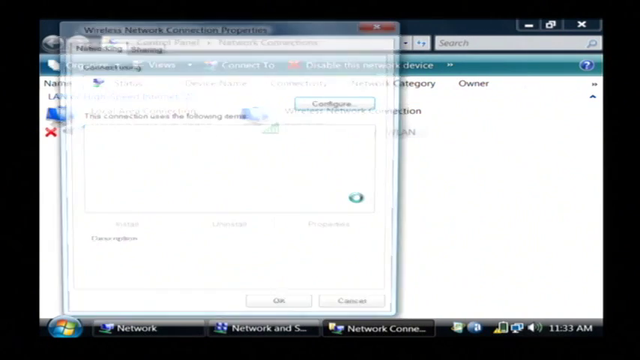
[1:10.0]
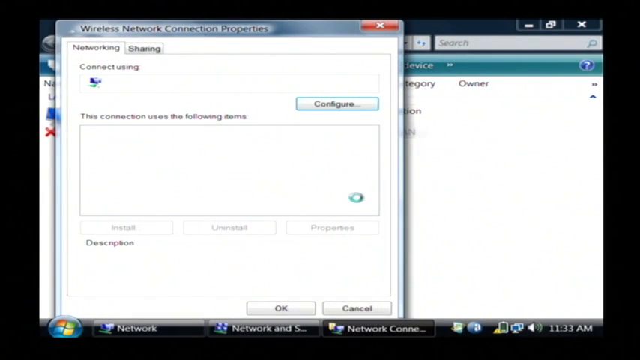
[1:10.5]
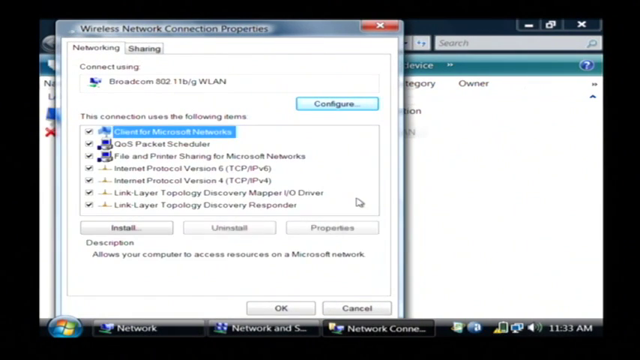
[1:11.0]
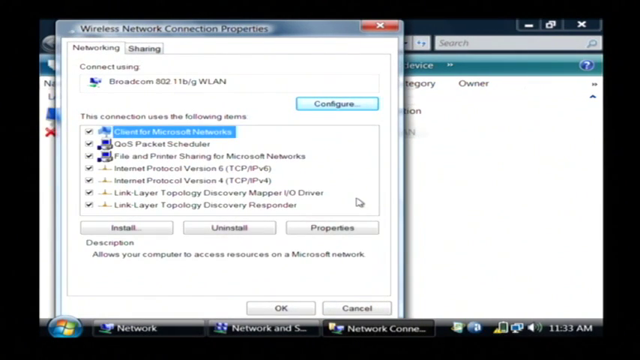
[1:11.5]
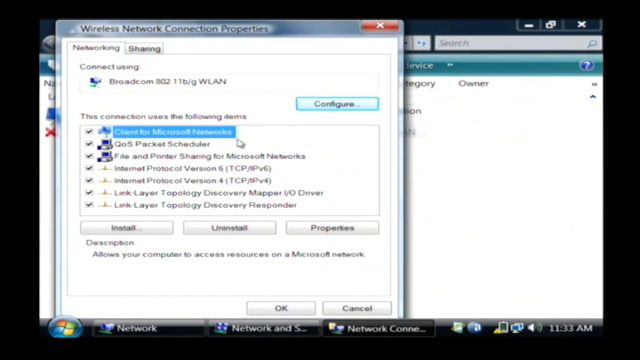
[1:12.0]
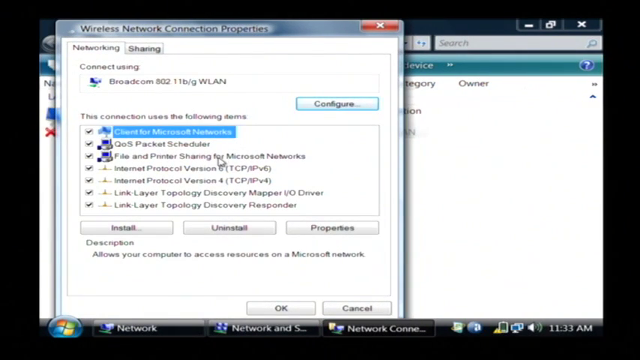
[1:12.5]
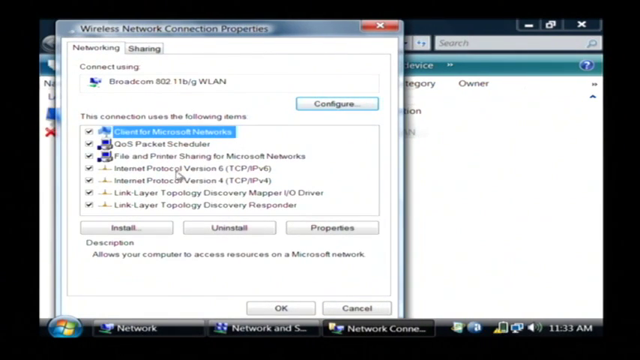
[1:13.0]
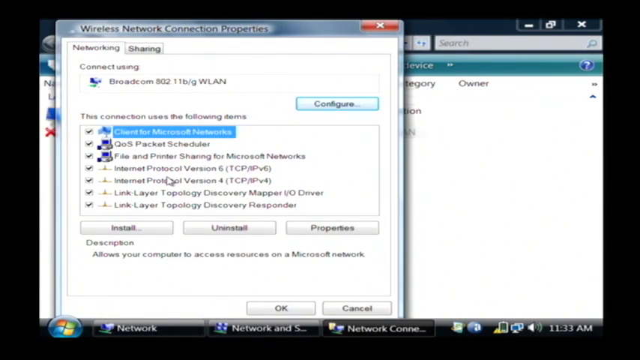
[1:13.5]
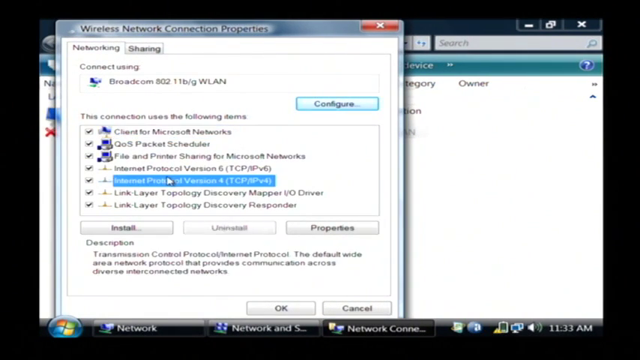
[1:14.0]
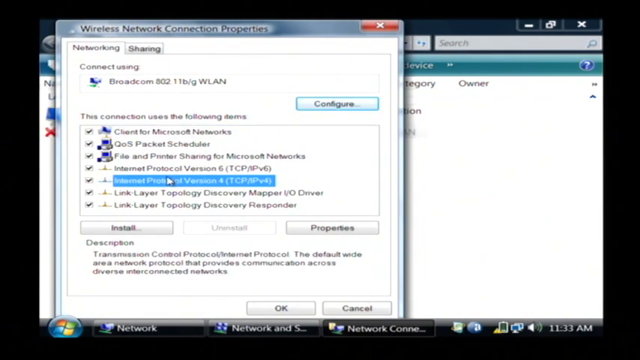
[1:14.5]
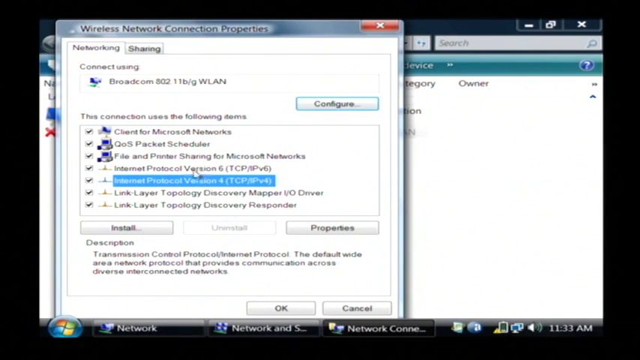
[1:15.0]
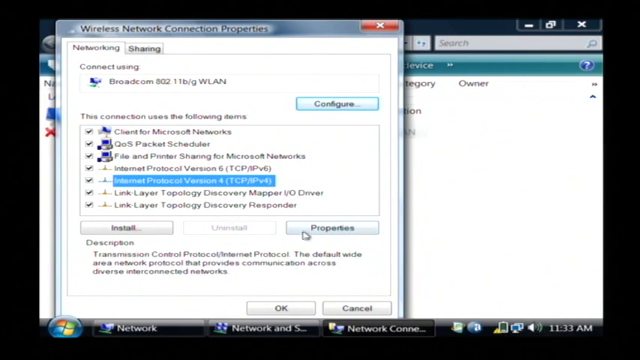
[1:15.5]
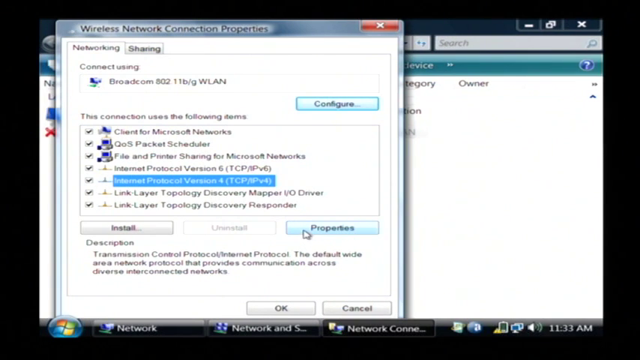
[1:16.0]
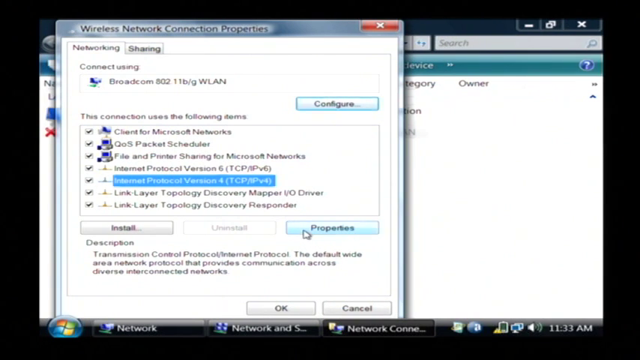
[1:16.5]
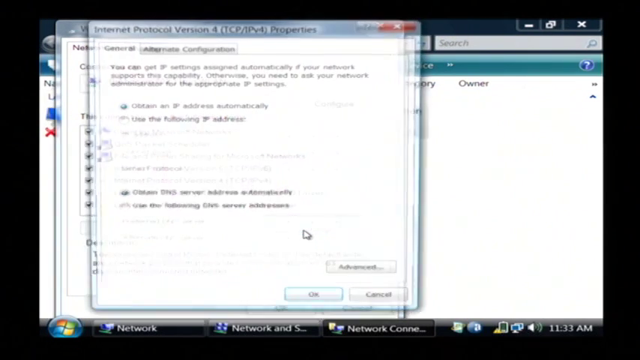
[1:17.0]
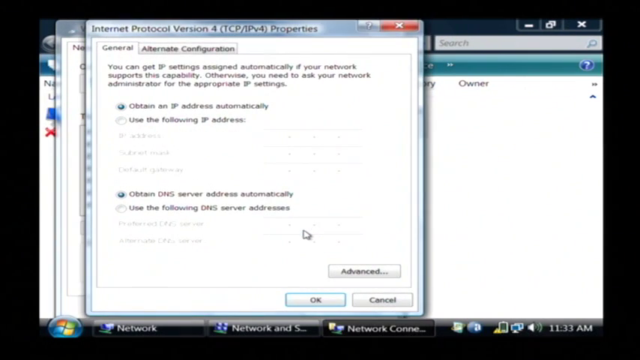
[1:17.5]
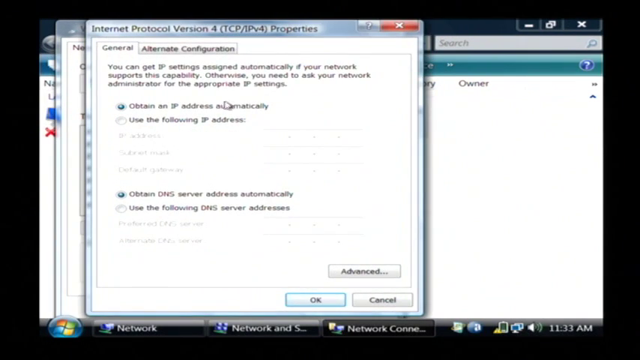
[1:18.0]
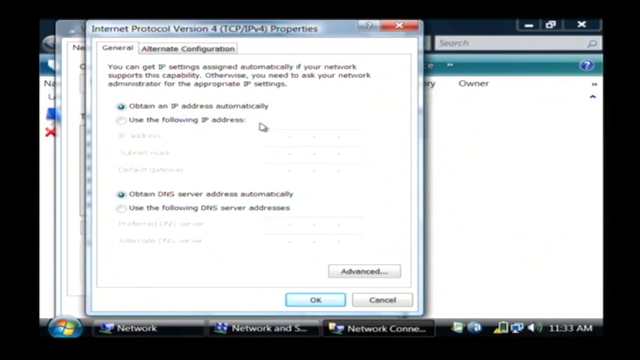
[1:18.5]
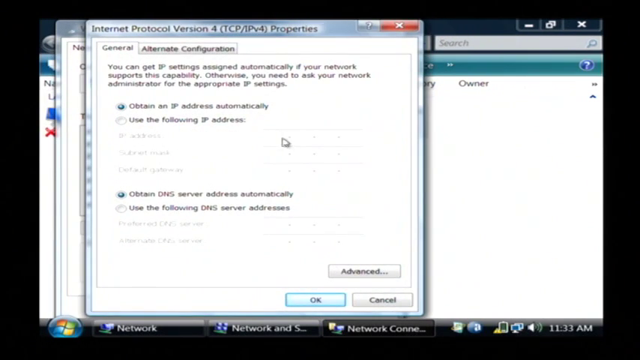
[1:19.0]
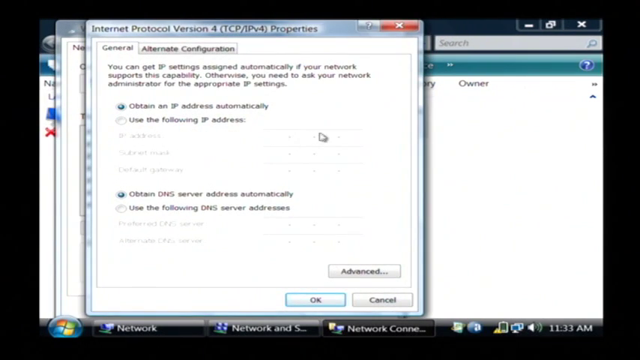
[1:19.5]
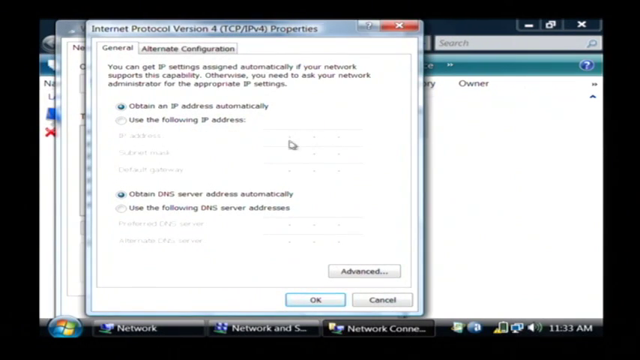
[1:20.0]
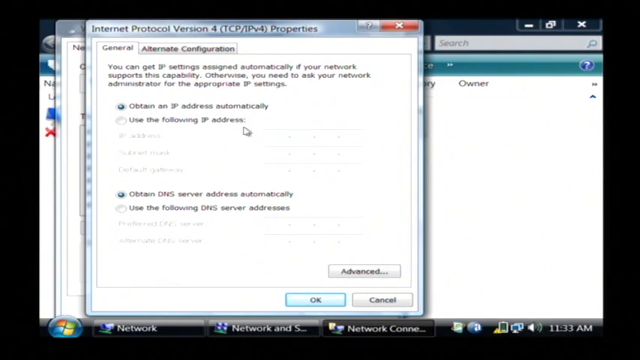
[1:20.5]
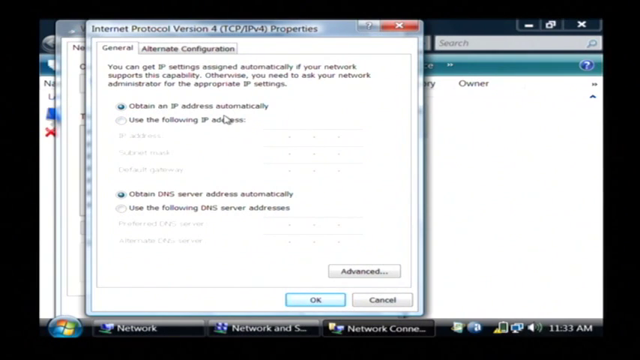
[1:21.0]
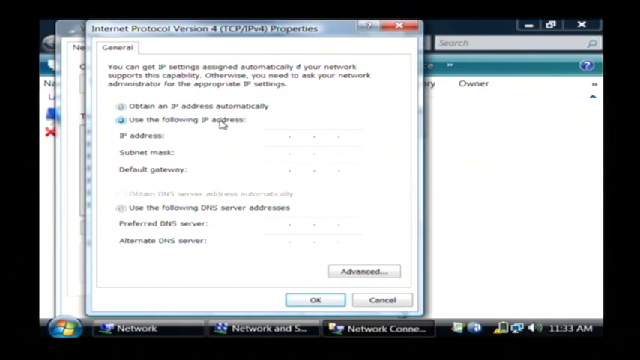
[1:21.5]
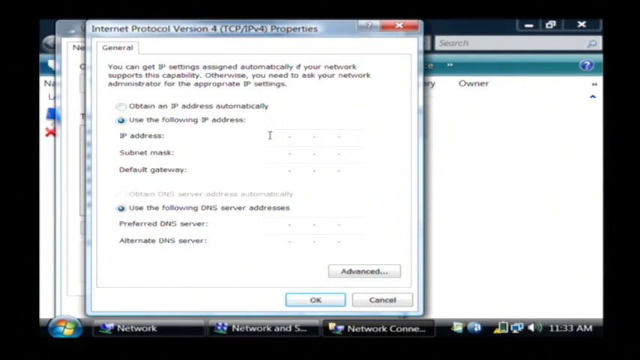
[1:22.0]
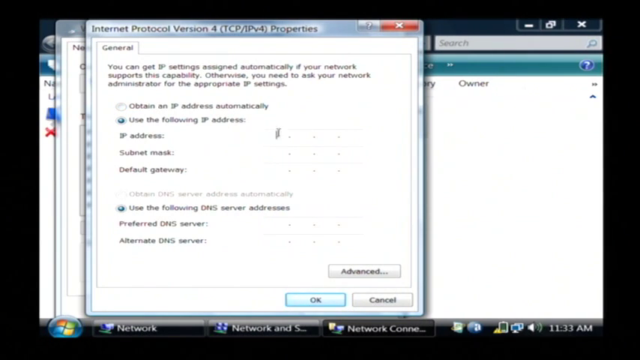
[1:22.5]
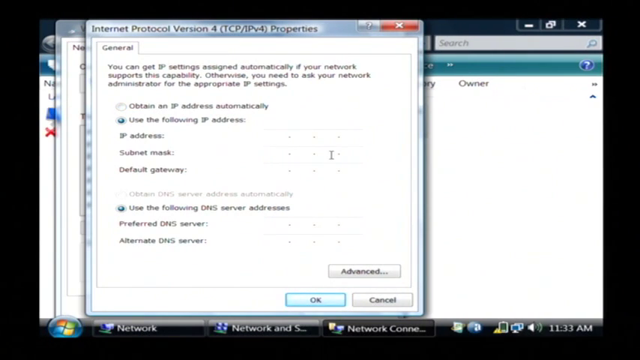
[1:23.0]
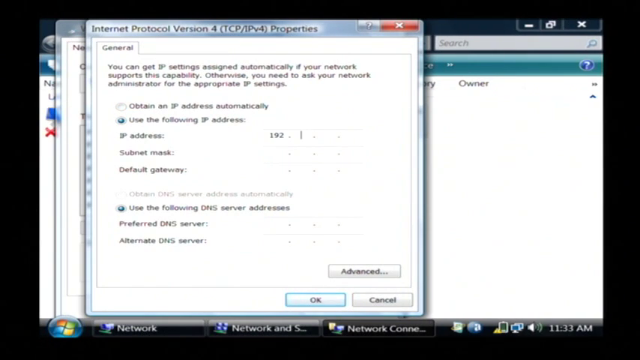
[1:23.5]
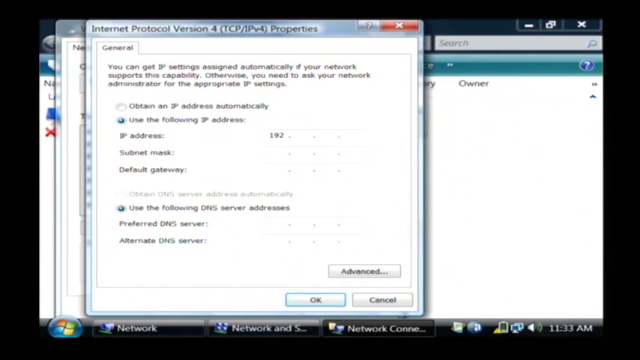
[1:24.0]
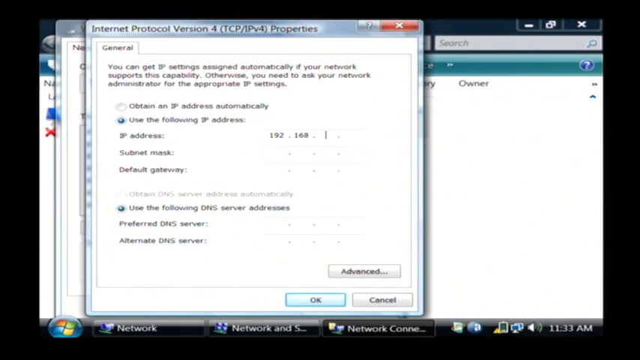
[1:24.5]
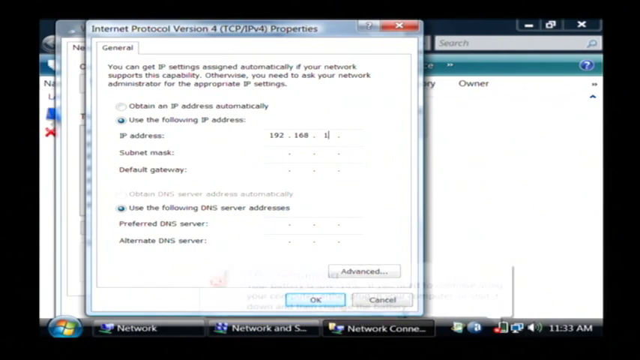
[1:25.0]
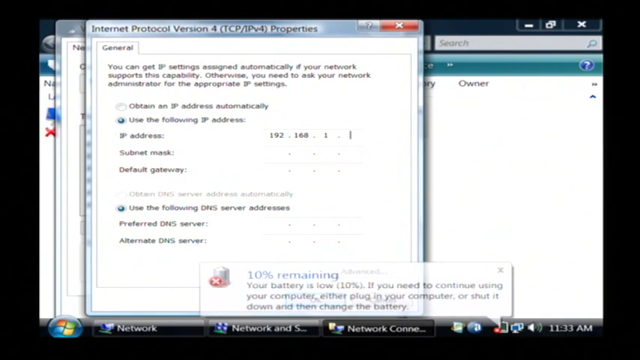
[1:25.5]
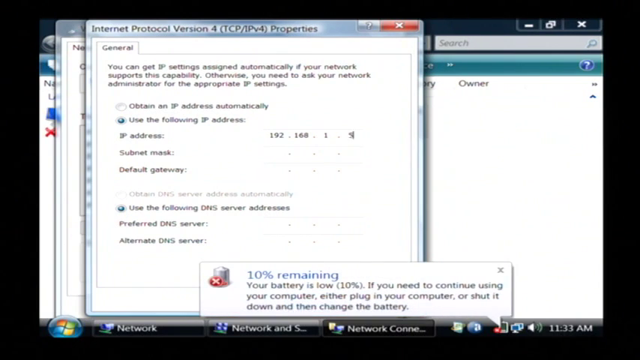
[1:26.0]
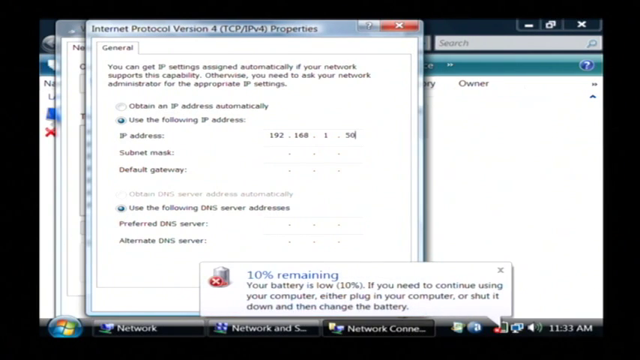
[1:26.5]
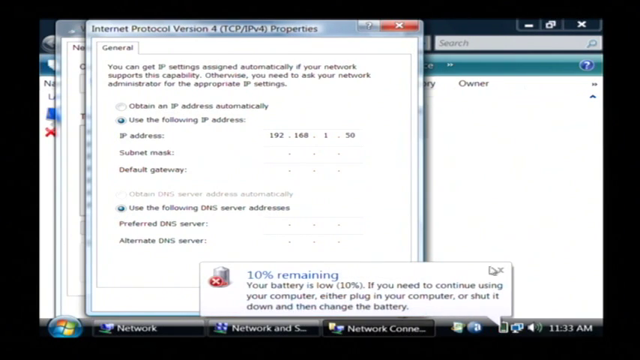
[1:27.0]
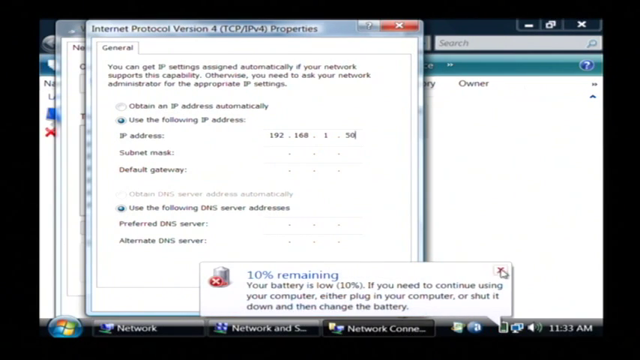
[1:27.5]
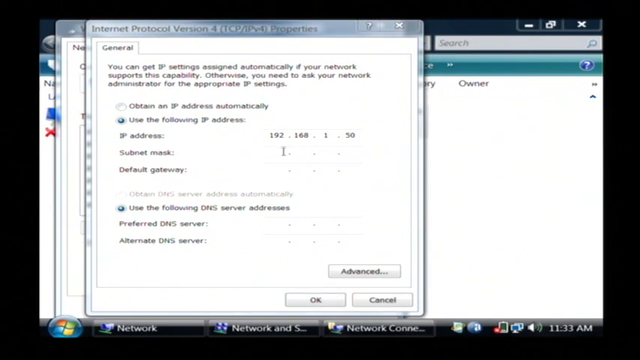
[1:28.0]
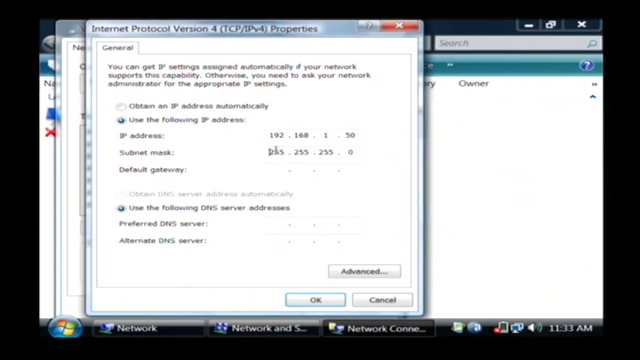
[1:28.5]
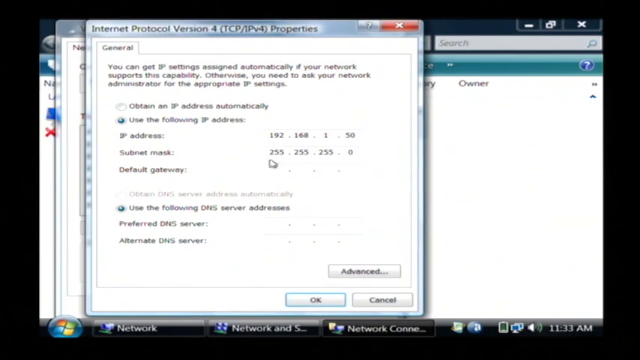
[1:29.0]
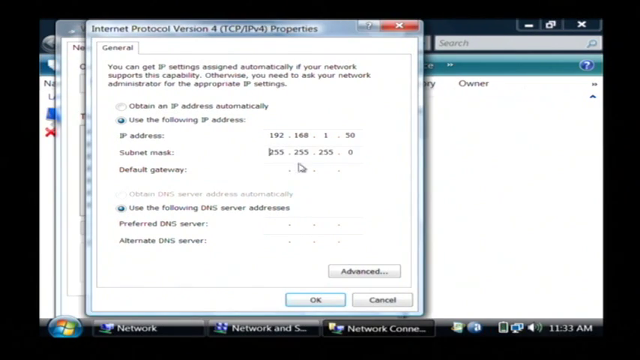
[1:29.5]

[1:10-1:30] A window appears over the top of the previous program window. It has a silver bar at the top that reads "wireless network connection properties", with a red X in the upper right-hand corner. Below is a white background with what appear to be folders; one folder is labeled "networking" and the folder behind it is labeled "sharing". Below networking it reads "connect using" with an icon below that, and below that "this connection uses the following items." The box is empty, and next to it is a button that says "configure". Below it are three separate buttons reading "install", "uninstall" and "properties", and there is also an area for a description. At the bottom of the box, justified to the right, are buttons that say "okay" and "cancel". When the mouse clicks on the networking folder, the region is populated with a large amount of information. He types an IP address into a separate window and clicks on advanced.